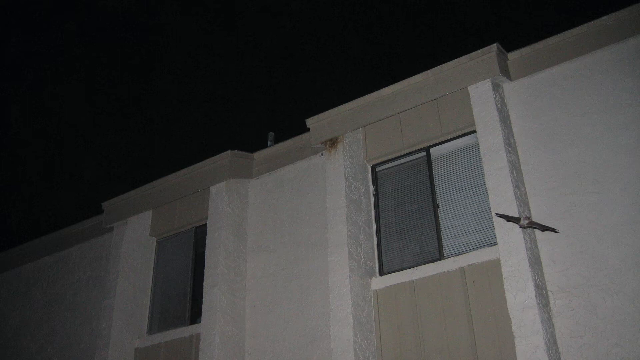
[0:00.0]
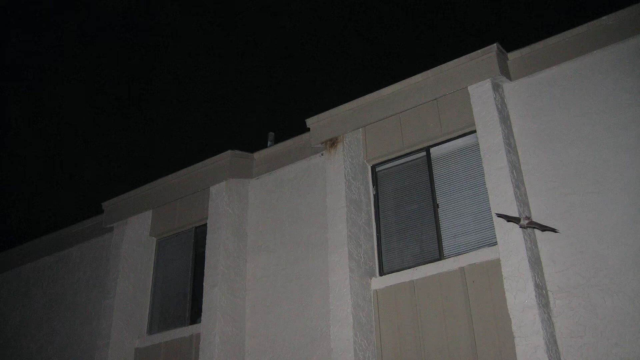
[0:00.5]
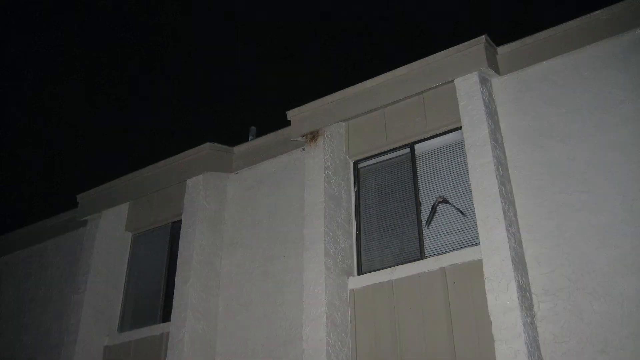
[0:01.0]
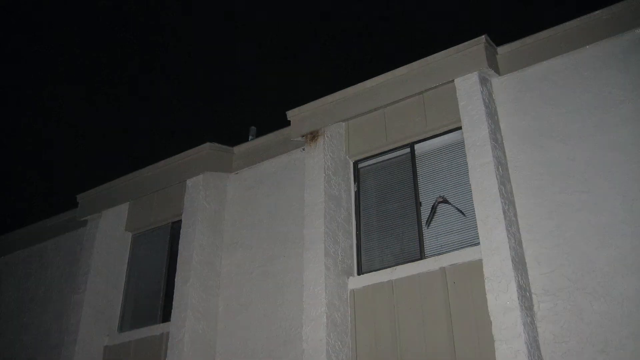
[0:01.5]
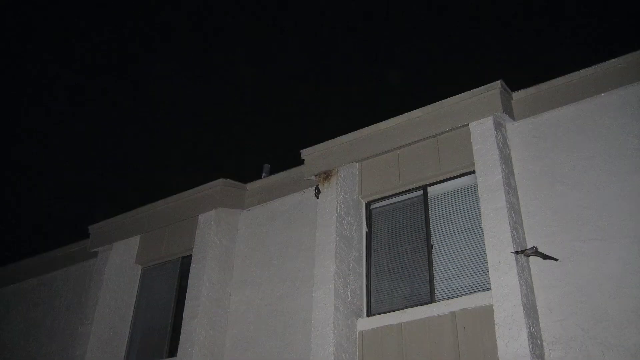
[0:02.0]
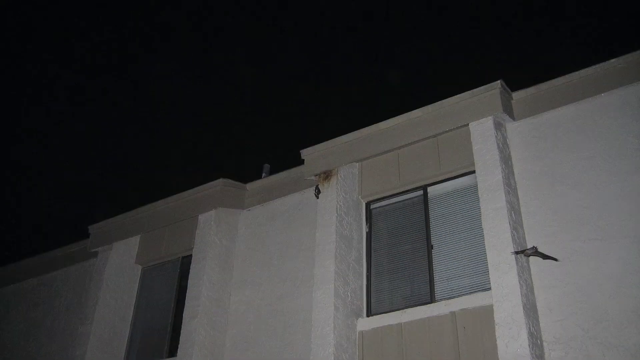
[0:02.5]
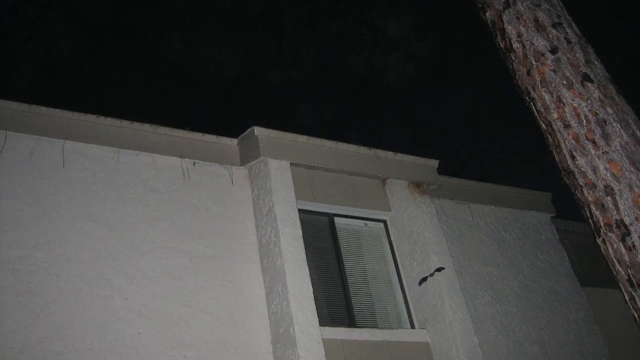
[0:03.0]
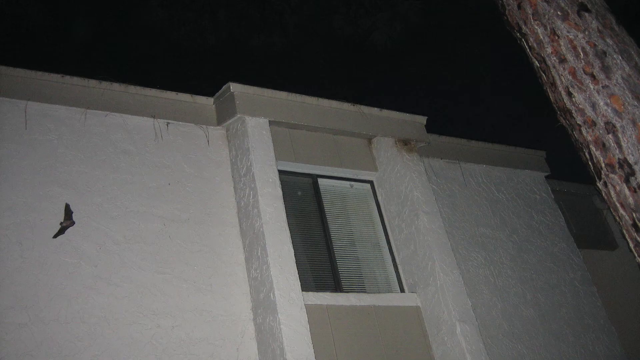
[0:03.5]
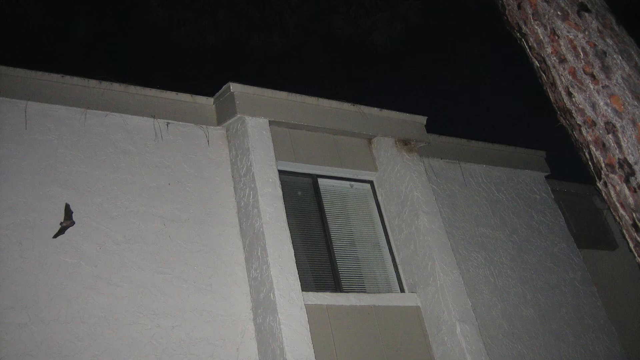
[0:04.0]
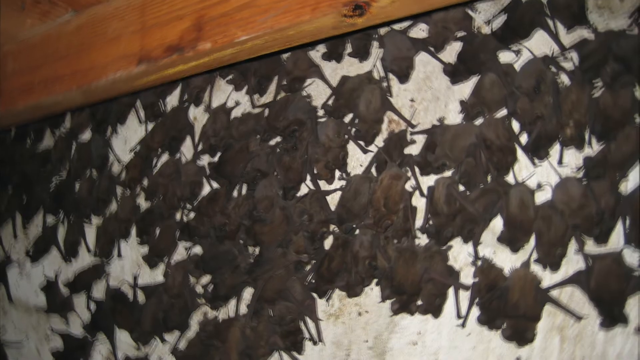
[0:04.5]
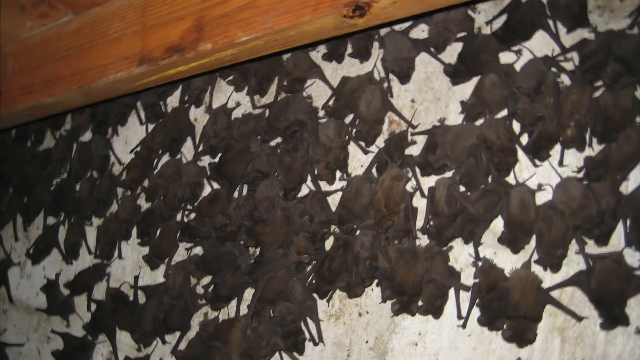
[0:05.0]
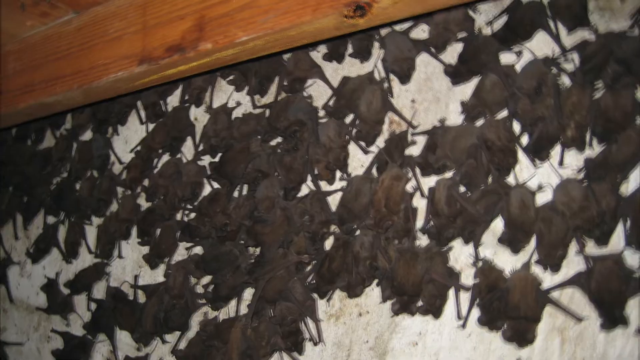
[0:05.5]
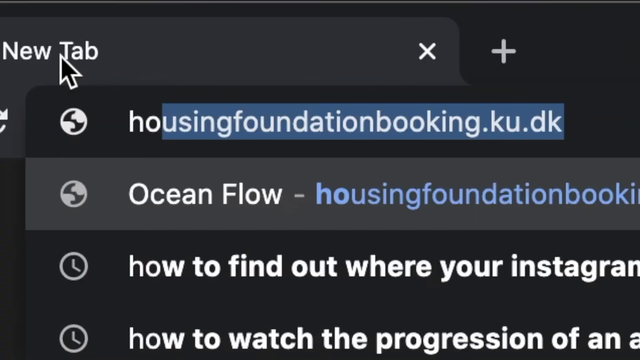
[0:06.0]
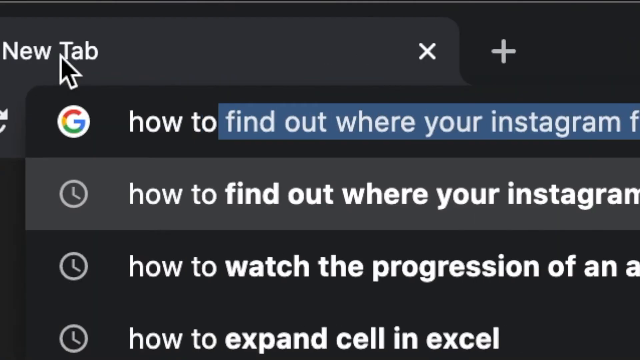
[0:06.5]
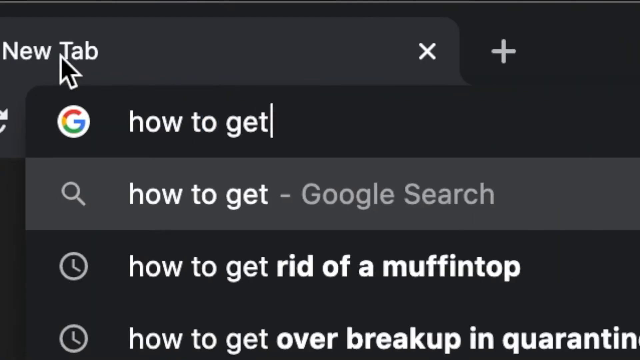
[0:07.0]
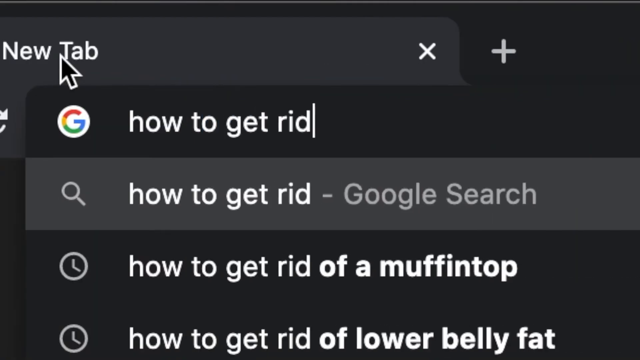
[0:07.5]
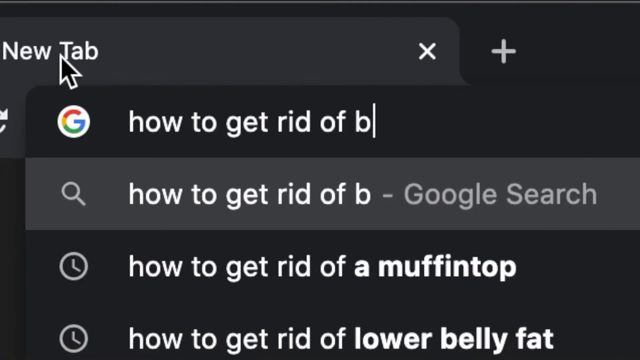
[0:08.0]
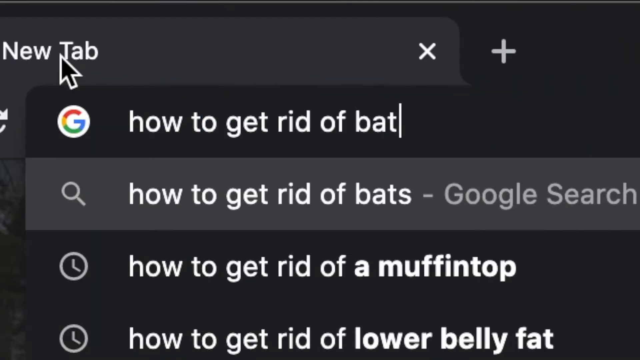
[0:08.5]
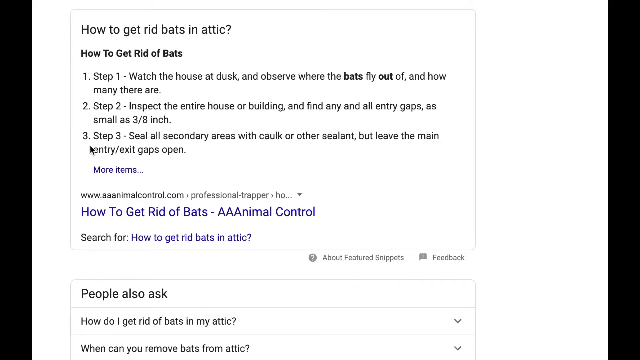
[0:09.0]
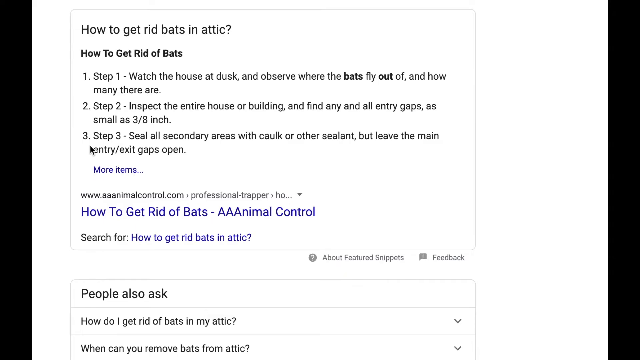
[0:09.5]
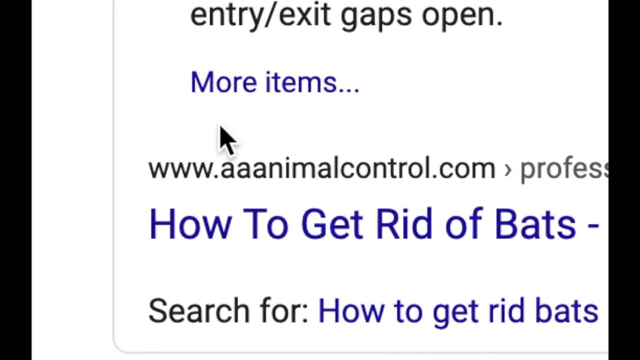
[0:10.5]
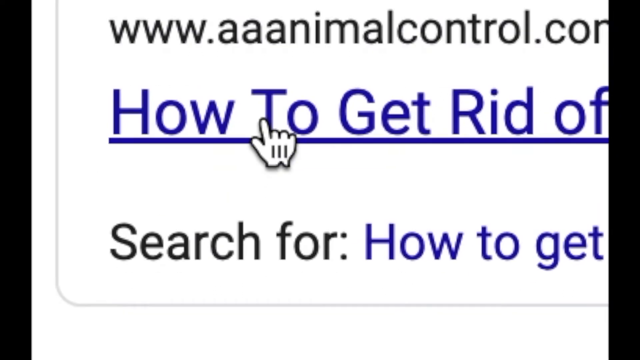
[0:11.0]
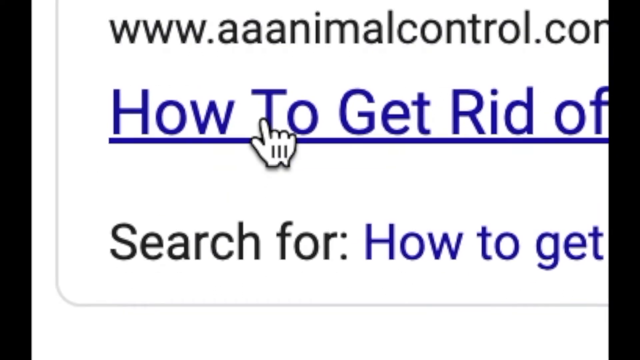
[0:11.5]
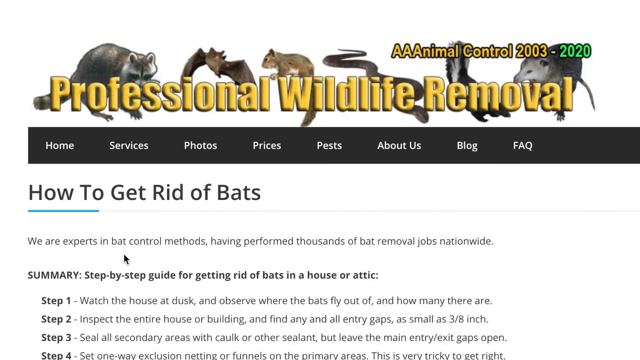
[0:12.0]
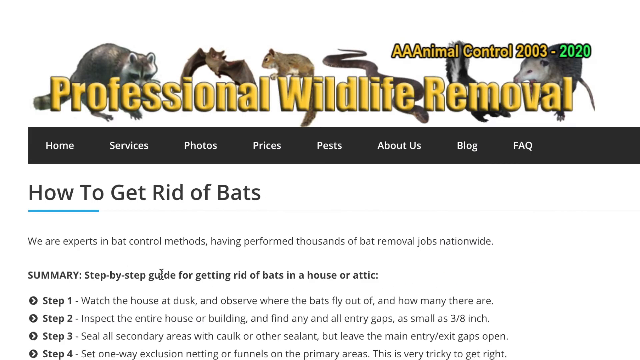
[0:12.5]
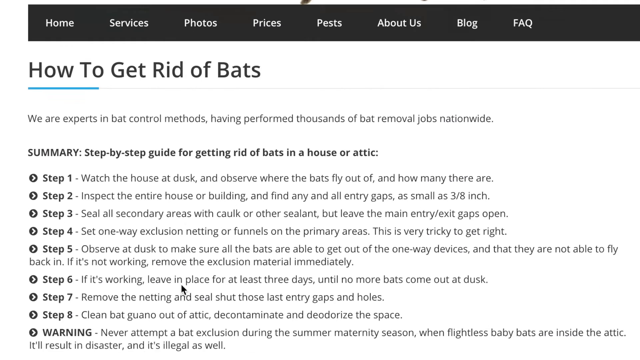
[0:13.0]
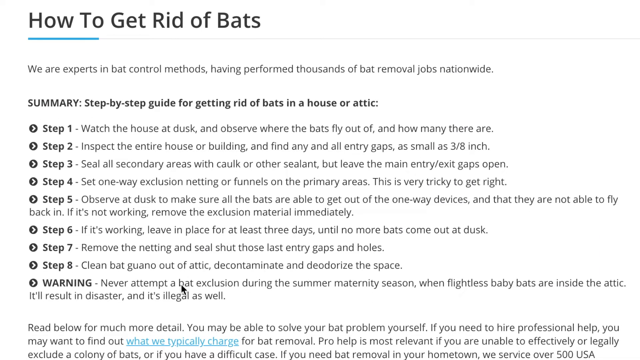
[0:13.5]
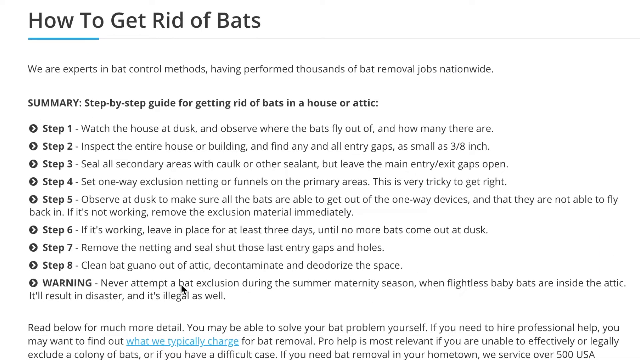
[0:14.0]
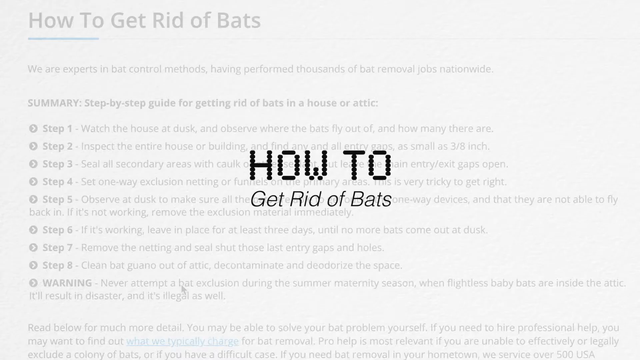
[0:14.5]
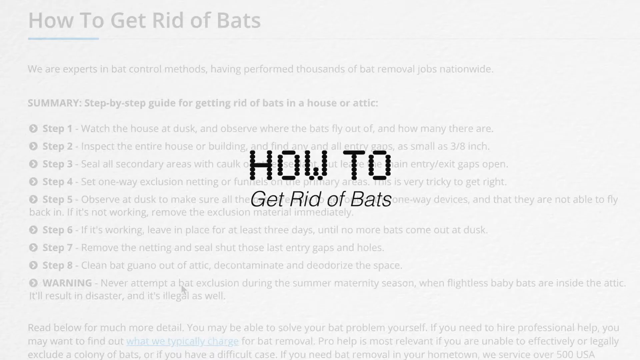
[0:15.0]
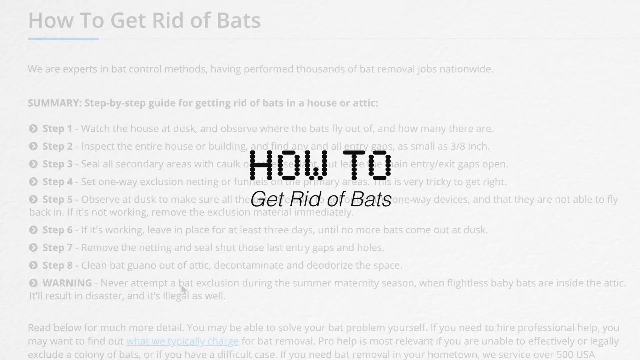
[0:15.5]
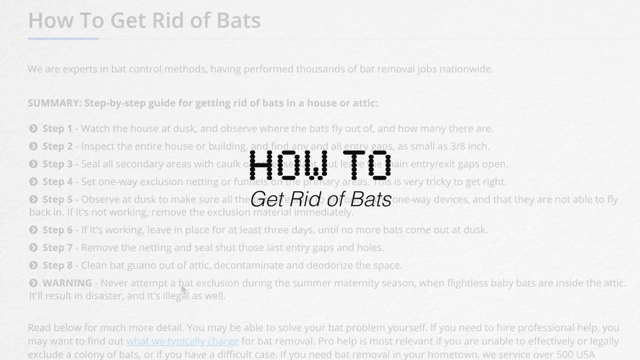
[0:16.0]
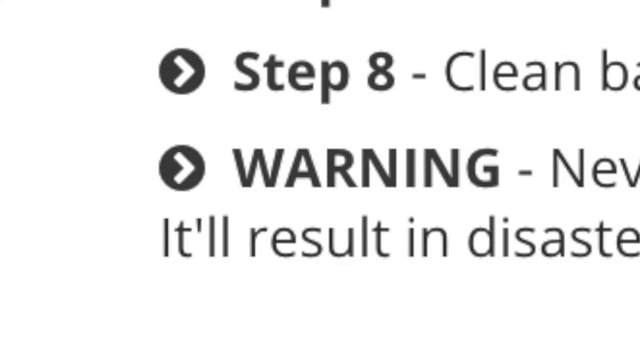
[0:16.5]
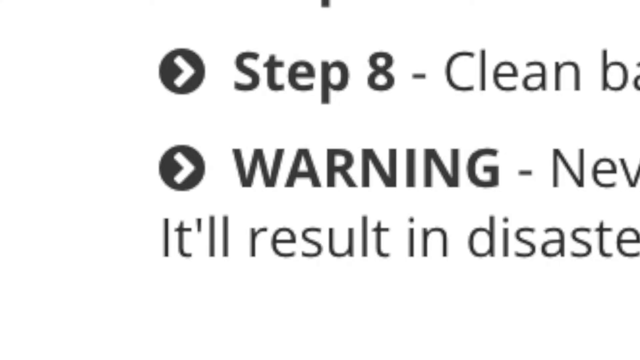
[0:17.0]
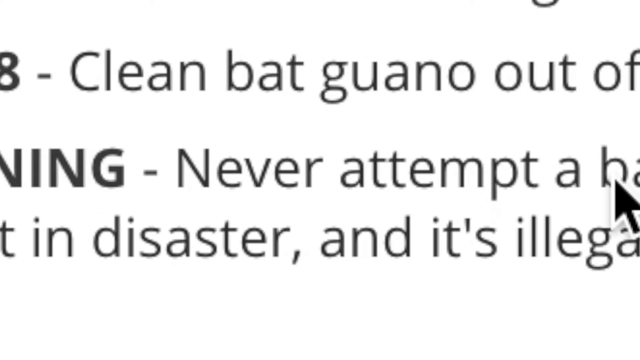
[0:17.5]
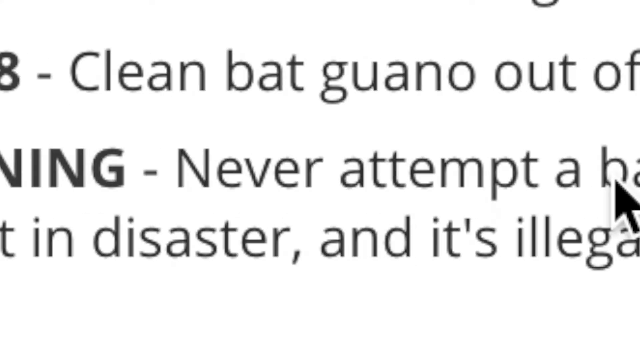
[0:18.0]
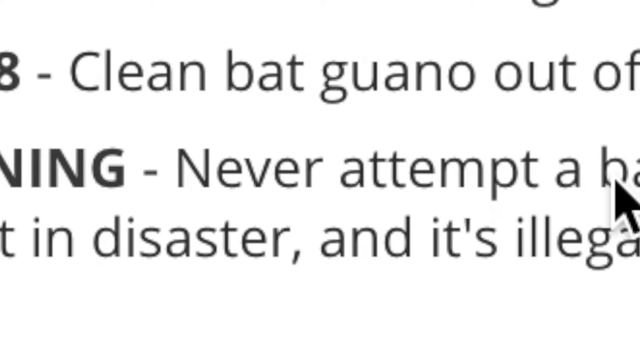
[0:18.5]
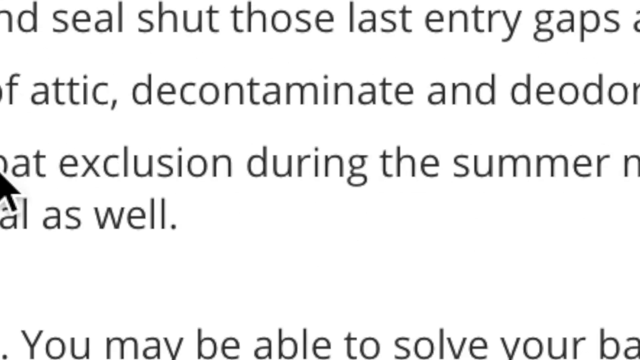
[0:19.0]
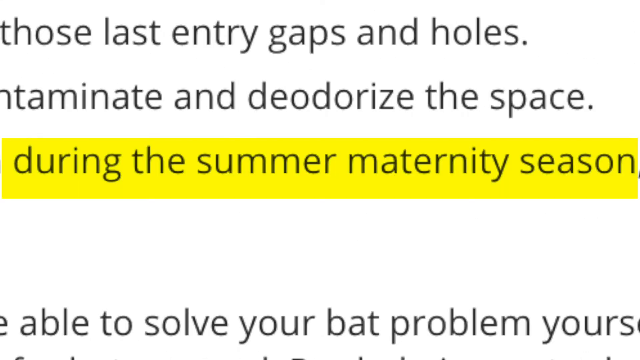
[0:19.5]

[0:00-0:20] A bat flies against a building. A whole congregation of bats is attached to the side of a building. The view then moves to a computer screen, where someone opens a new tab and types in how to get rid of bats. On the search page they come upon a result reading "www.aaanimalcontrol.com" under "how to get rid of bats"; there are more items, but they click on this particular heading. The website has a picture across the top of different kinds of animals, and mostly it says "professional wildlife removal." It indicates they were established from 2003 to 2020. The page says "how to get rid of bats," and they scroll down through many steps. "How to get rid of bats" appears in the middle, along with a warning about cleaning bat grano. The words are very large and cut off because they don't fit on the screen, but something about "during the summer" is highlighted in yellow and flashes on the screen very quickly.